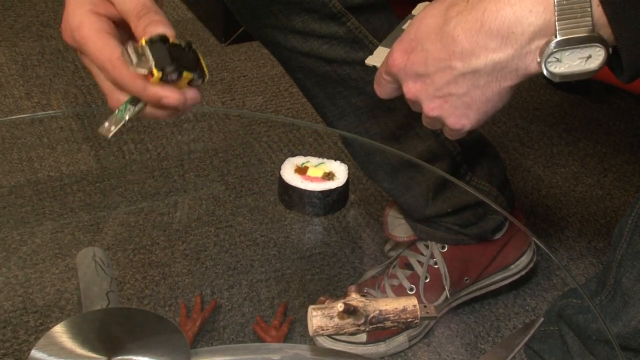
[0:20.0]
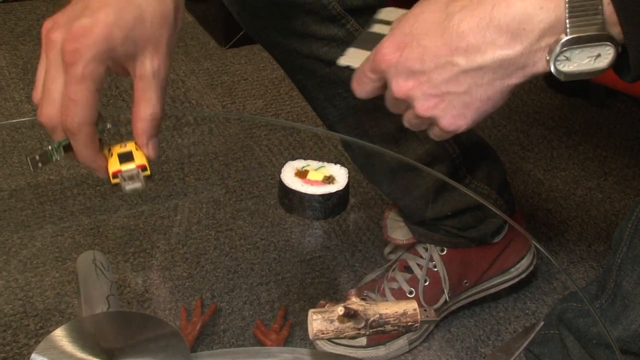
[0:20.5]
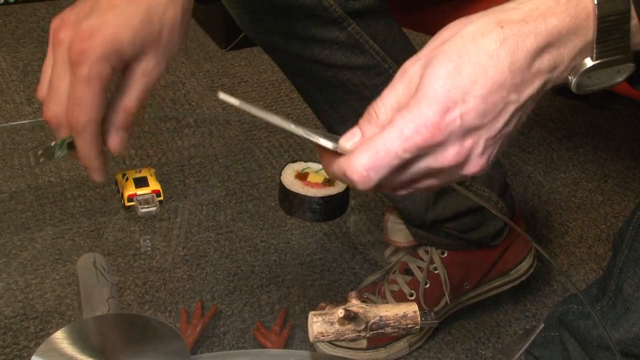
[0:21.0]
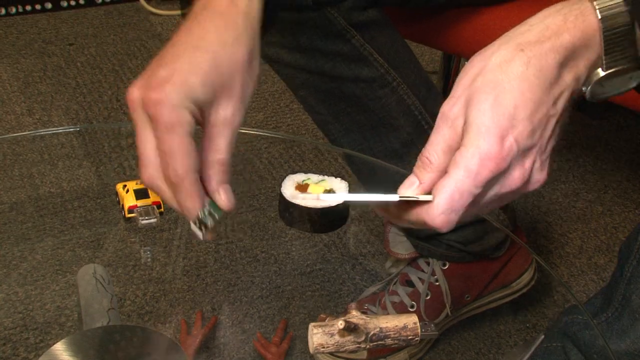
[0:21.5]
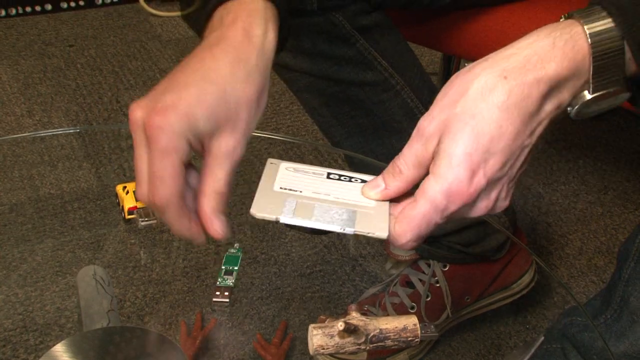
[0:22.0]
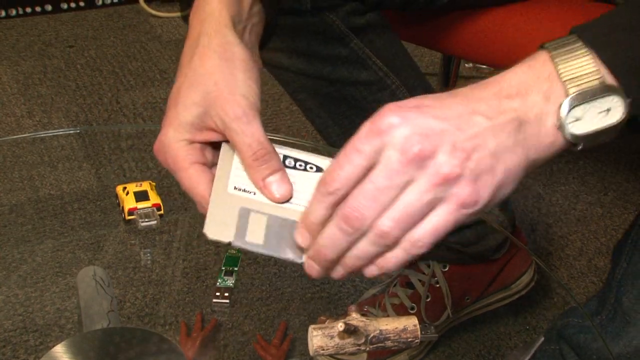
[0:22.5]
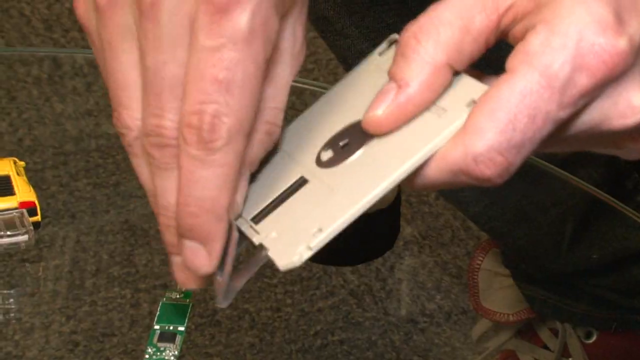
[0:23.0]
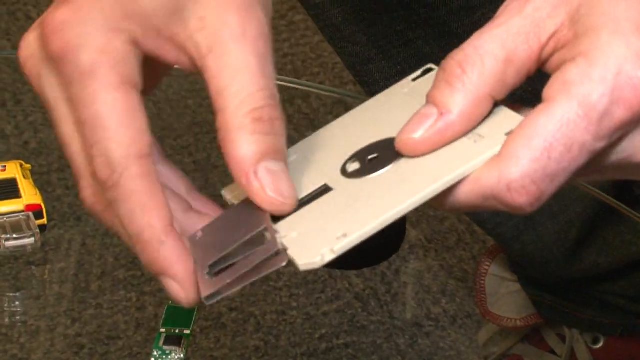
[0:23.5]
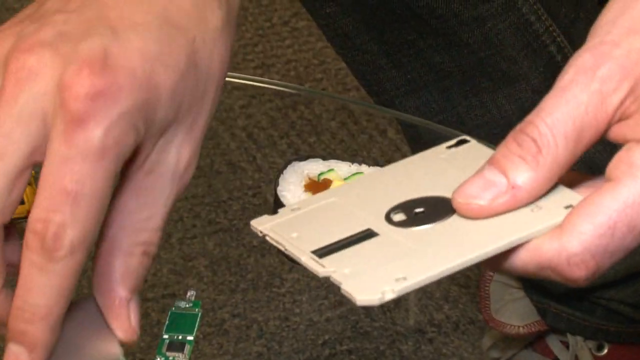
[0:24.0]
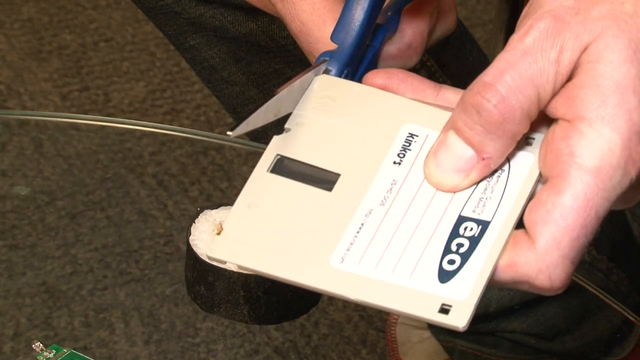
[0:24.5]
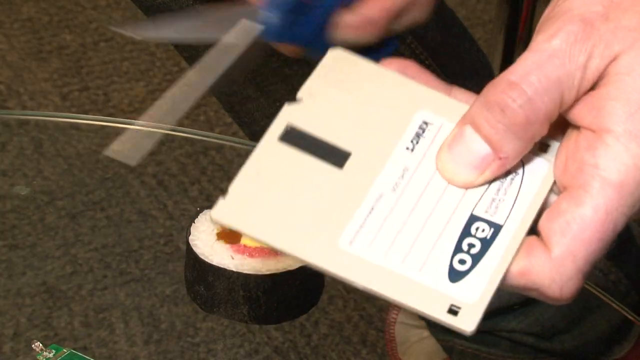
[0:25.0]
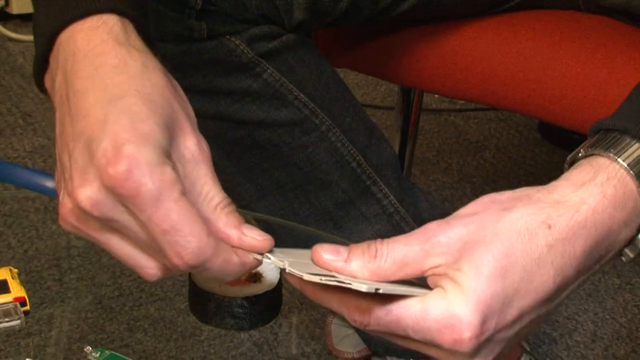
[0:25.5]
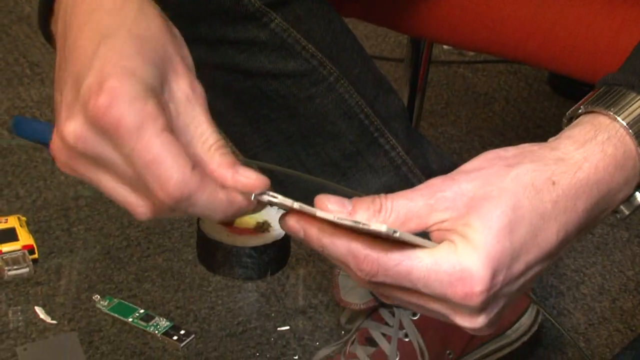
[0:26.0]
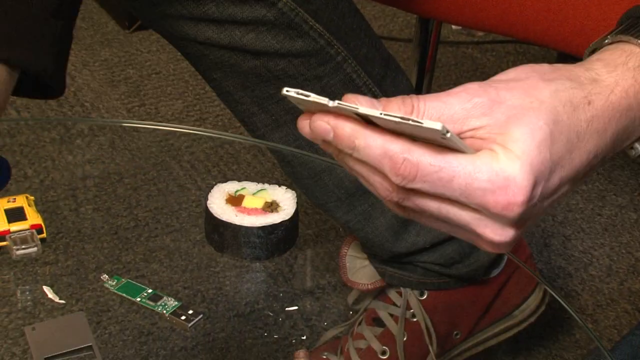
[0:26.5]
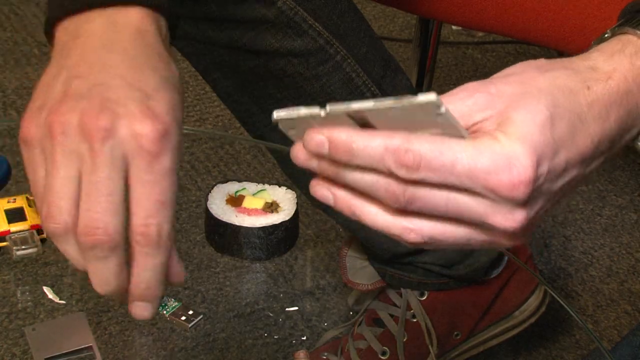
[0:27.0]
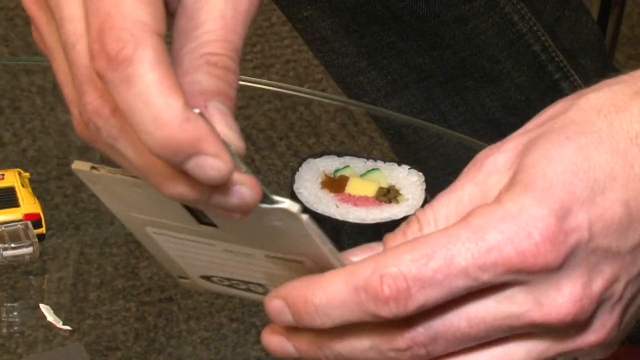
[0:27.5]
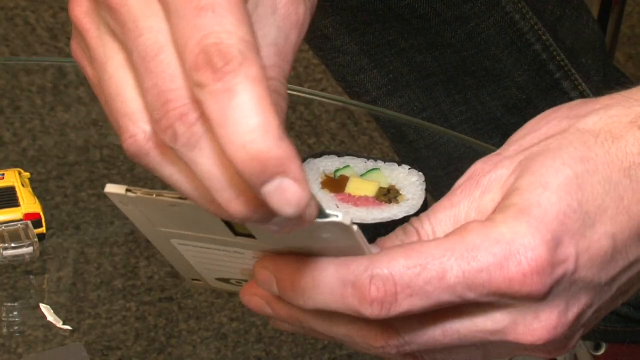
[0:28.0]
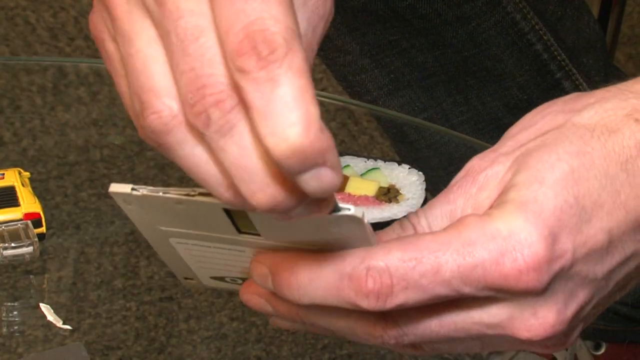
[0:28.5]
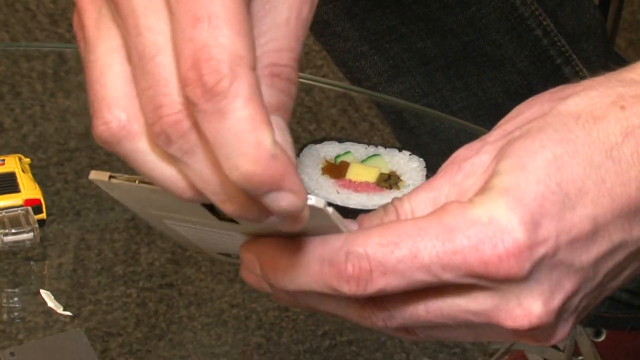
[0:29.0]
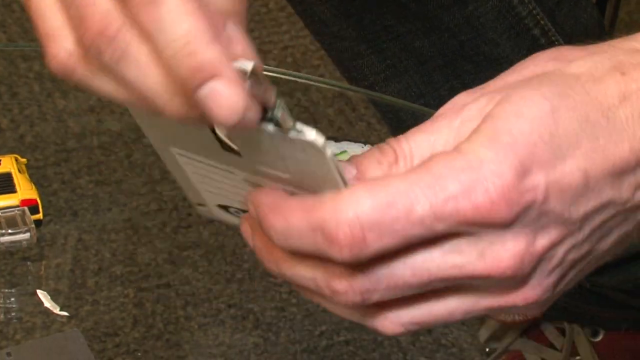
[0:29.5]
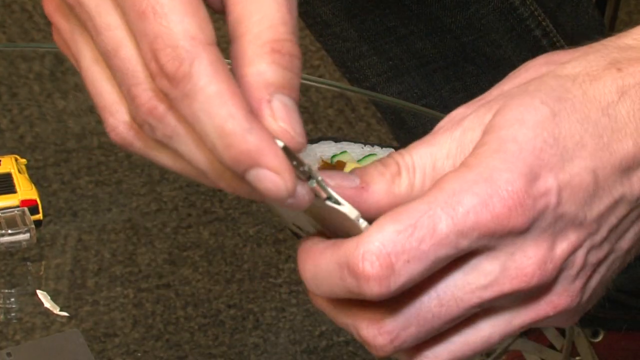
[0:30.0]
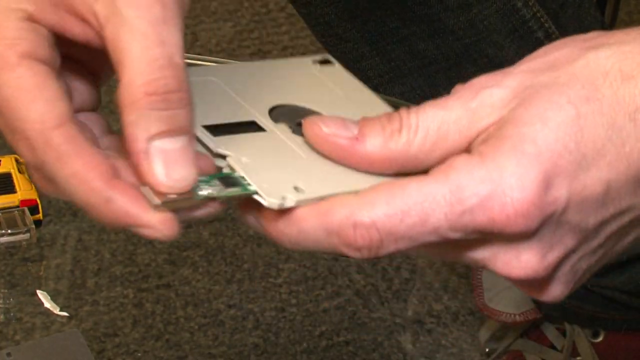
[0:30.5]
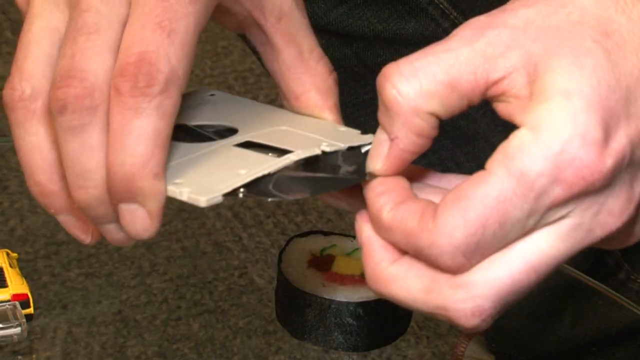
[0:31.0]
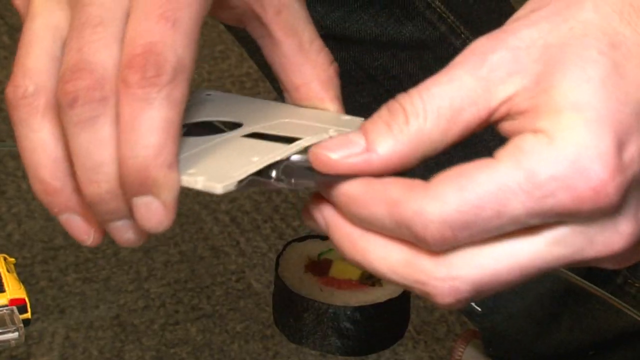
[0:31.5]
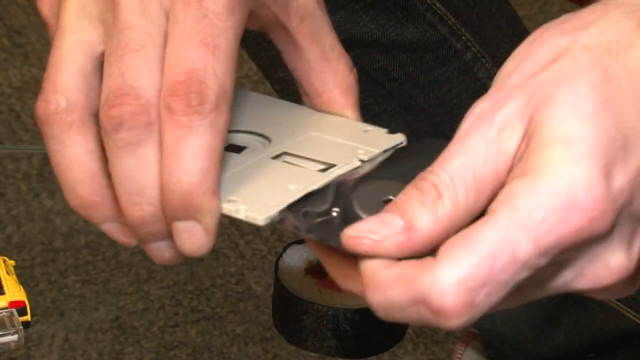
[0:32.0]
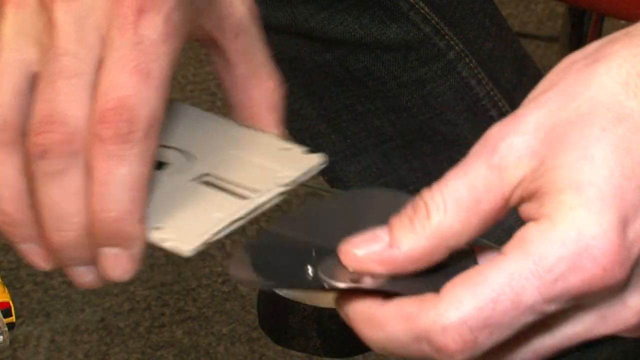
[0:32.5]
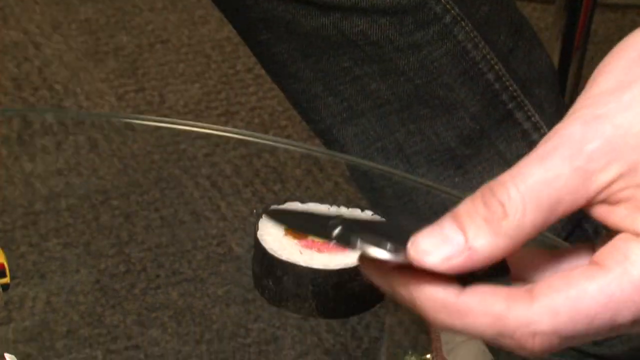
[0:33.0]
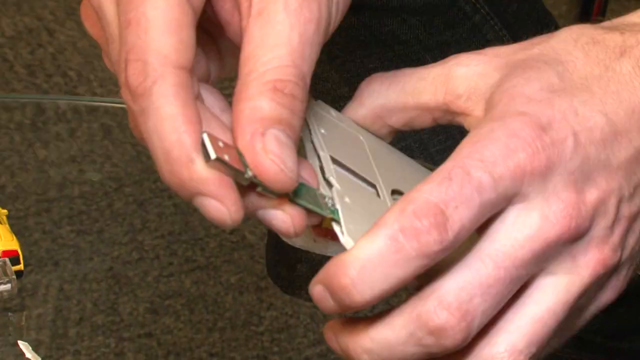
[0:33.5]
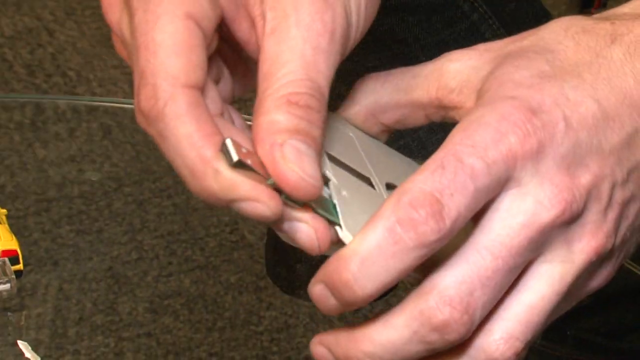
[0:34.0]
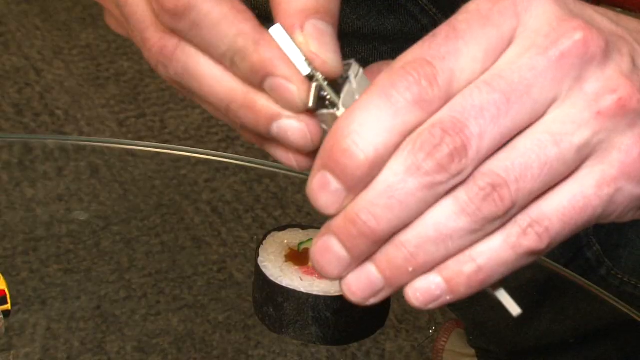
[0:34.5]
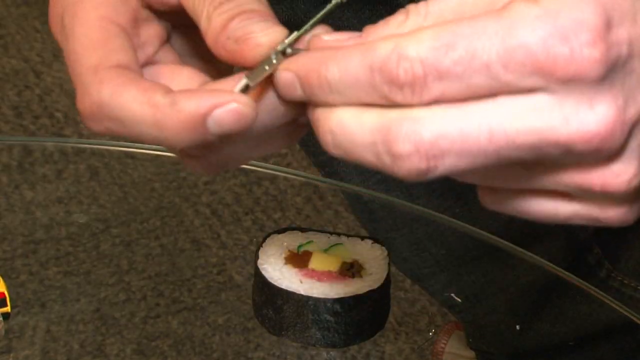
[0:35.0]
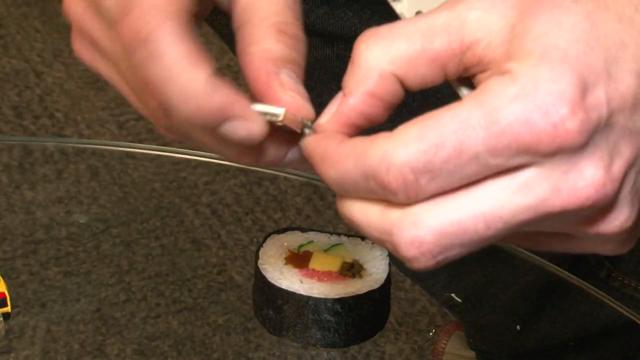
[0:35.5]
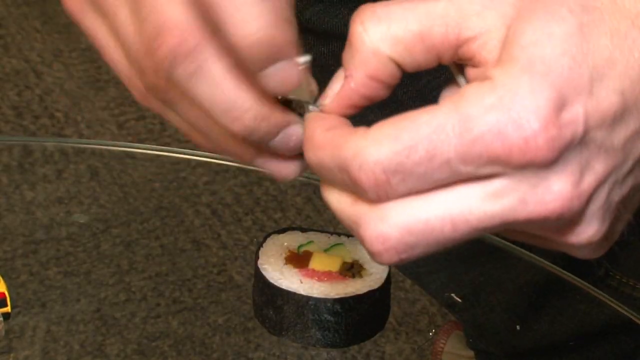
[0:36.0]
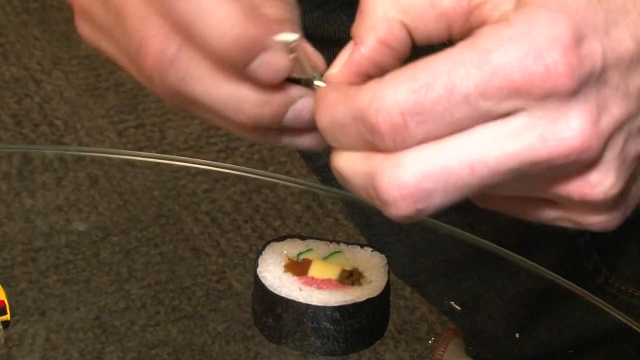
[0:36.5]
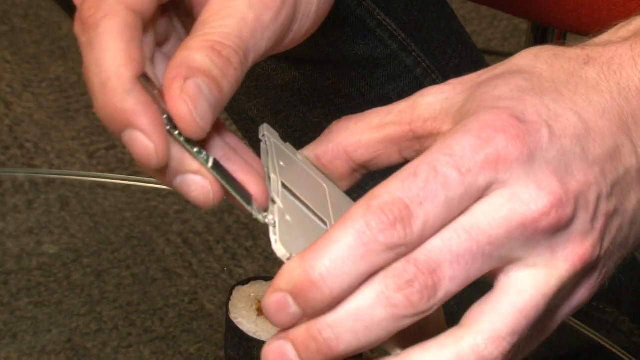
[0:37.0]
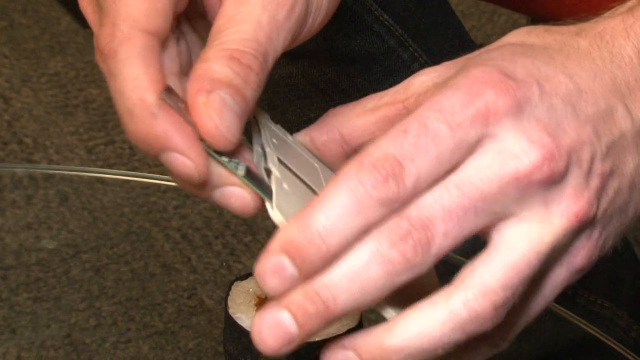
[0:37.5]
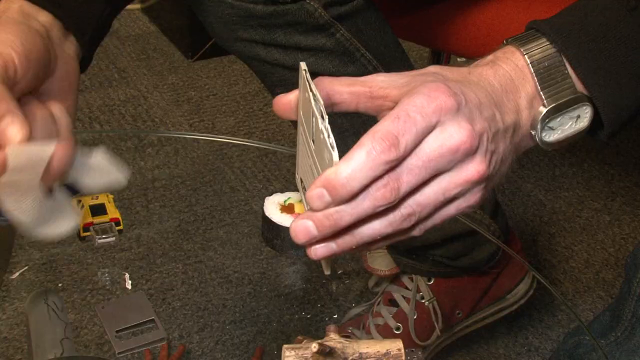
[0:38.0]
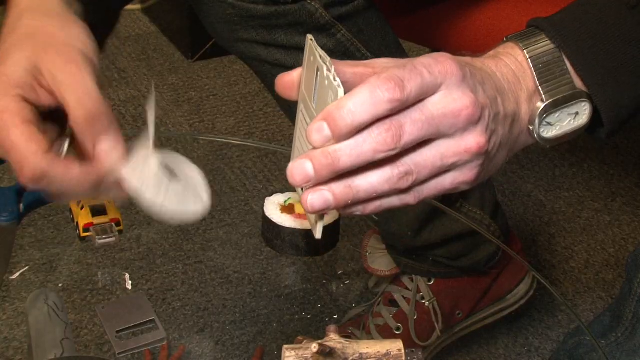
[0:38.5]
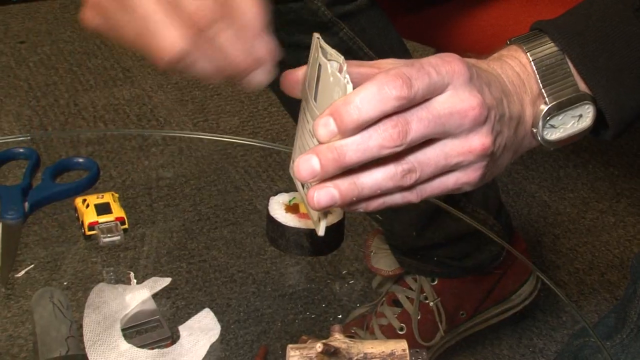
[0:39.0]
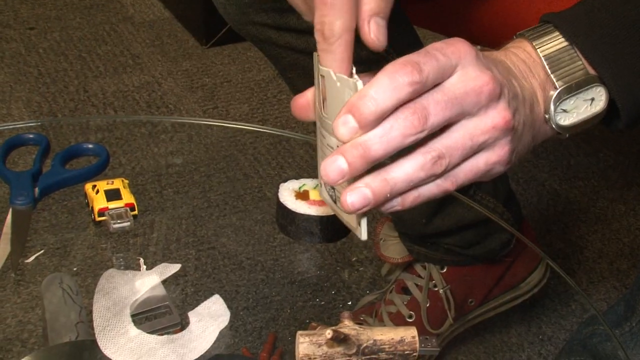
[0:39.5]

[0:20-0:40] A person cuts a paper box and puts a USB port on it, trying to fix it in place and then trying to remove it.